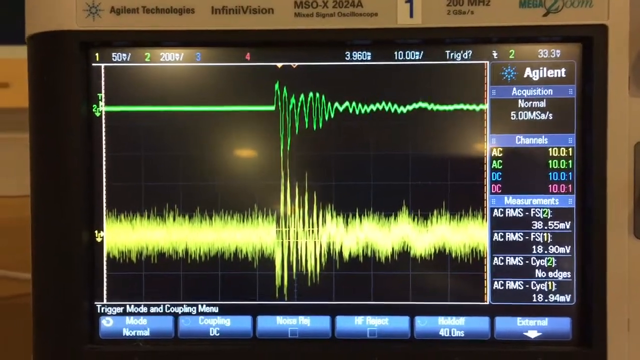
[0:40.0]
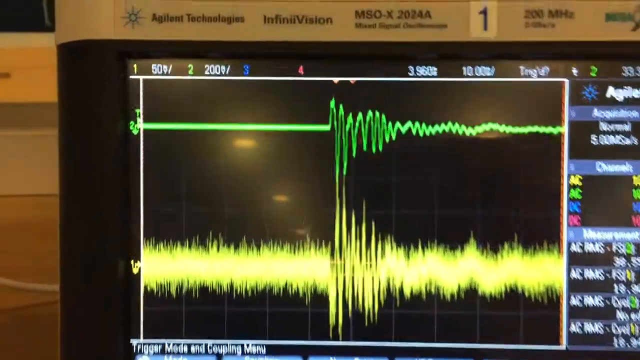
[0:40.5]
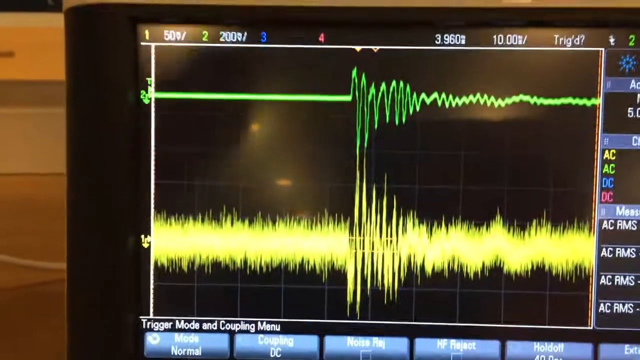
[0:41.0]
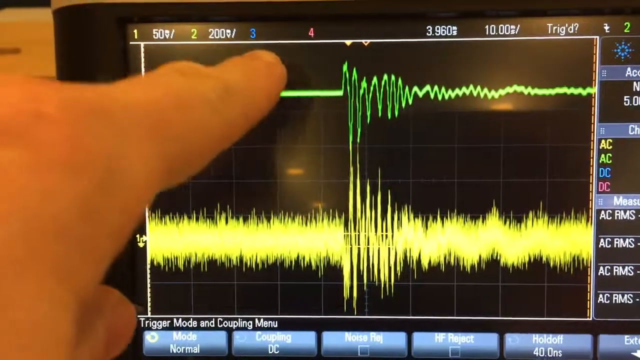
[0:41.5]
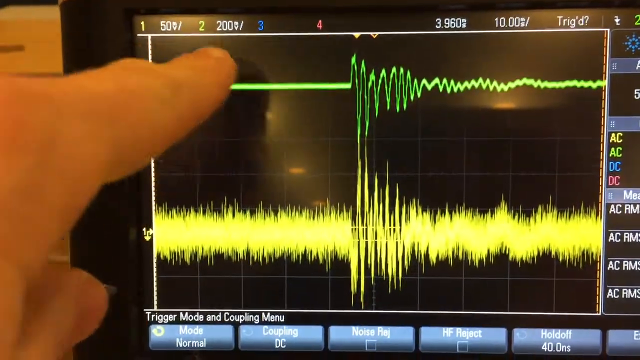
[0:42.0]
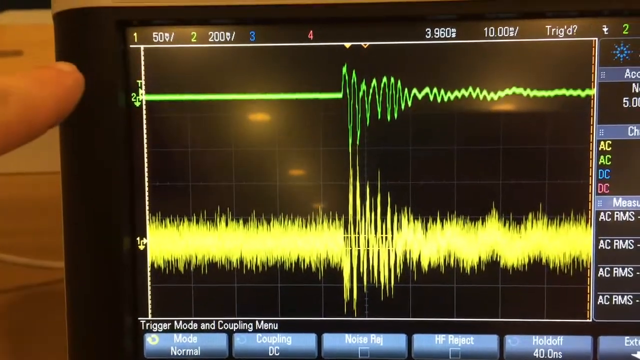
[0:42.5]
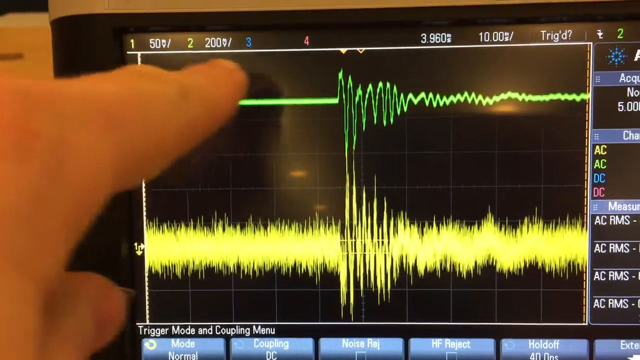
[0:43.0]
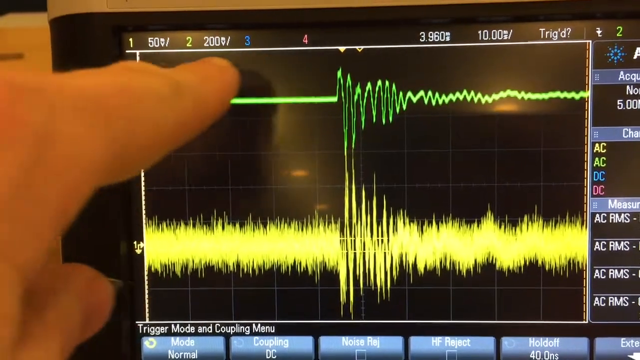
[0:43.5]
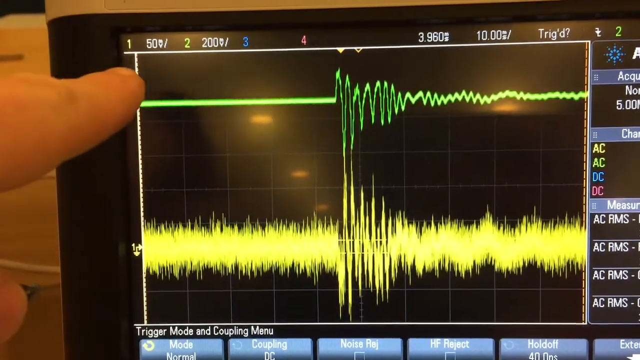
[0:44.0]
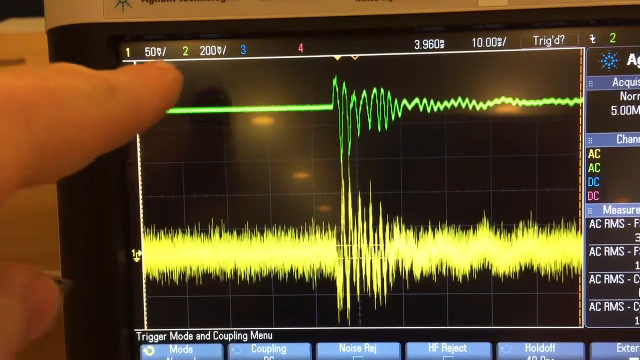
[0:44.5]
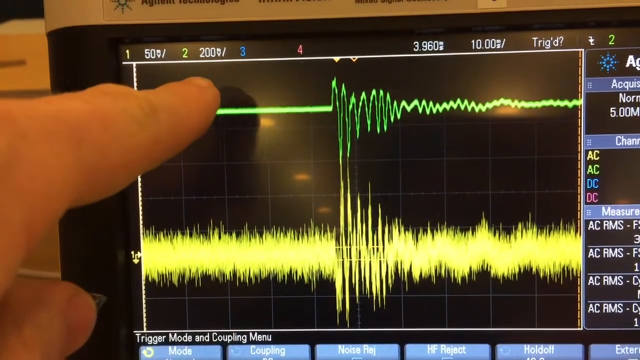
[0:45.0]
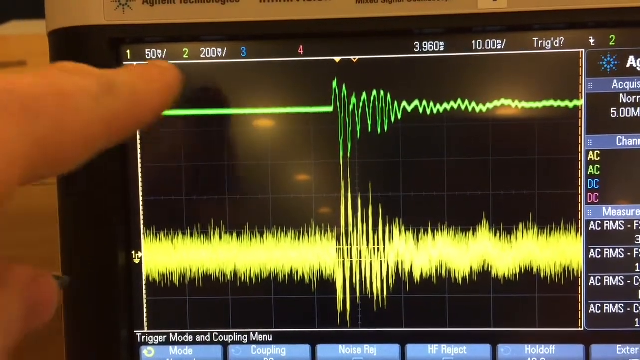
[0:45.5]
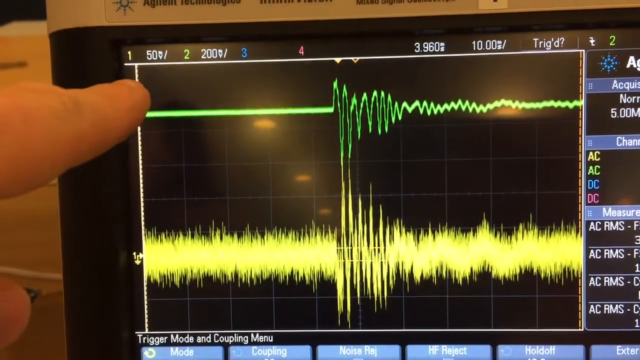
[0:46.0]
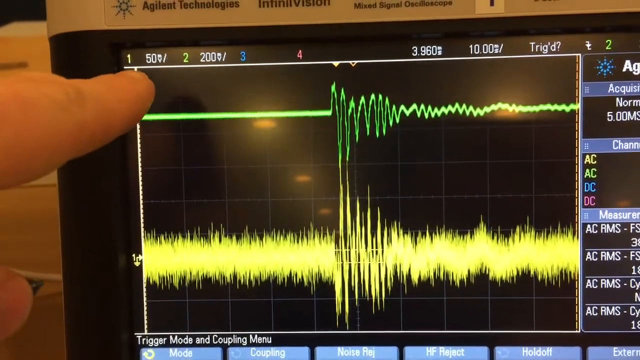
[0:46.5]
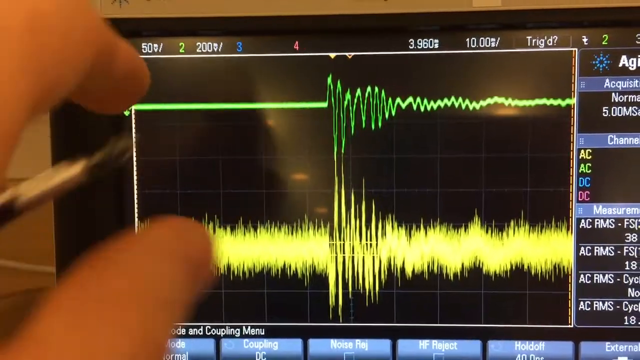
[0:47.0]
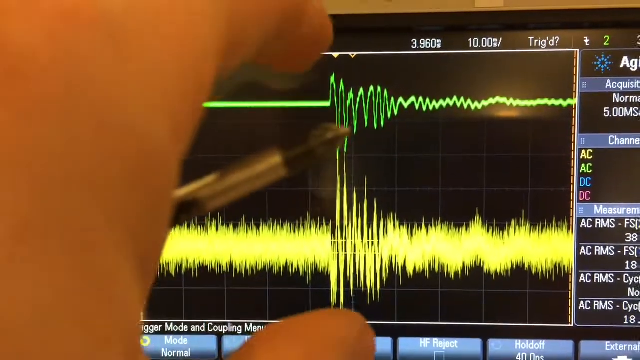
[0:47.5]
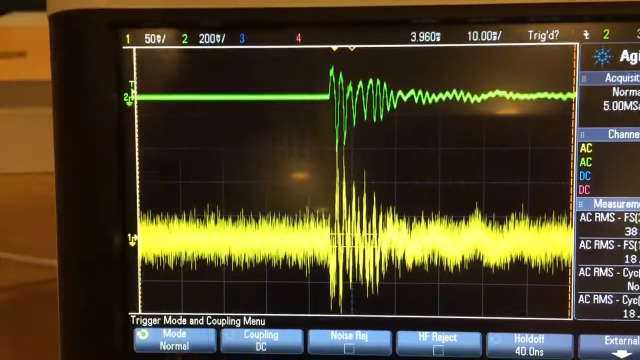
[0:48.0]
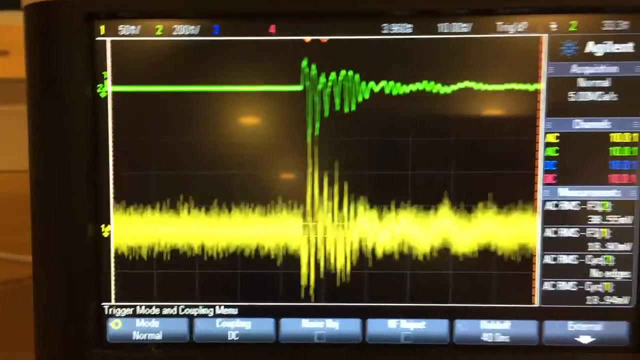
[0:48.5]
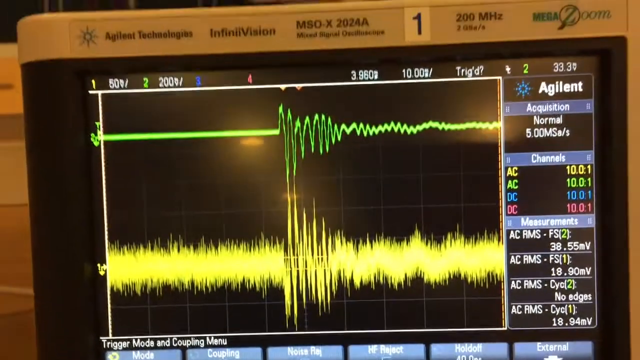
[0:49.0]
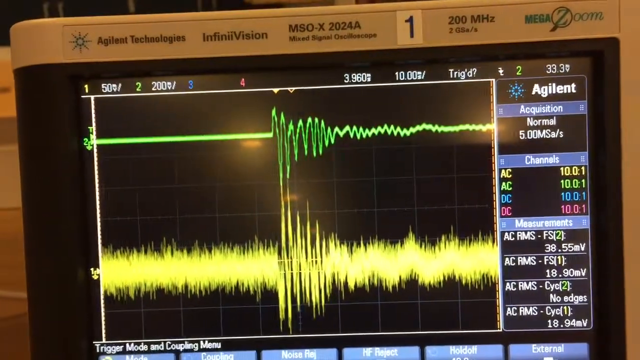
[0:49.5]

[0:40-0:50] A man shows the ripples of waves on a machine, pointing out information such as the positions of the normal and channel measurements. Using his finger, he indicates the first wave, which is a linear line at the beginning and later forms into frequencies. The second line is a very congested wave of frequencies. There is information on the right side of the screen, and the measurements include records for AC RMS. Some channels are given with a number such as "100.0.1".